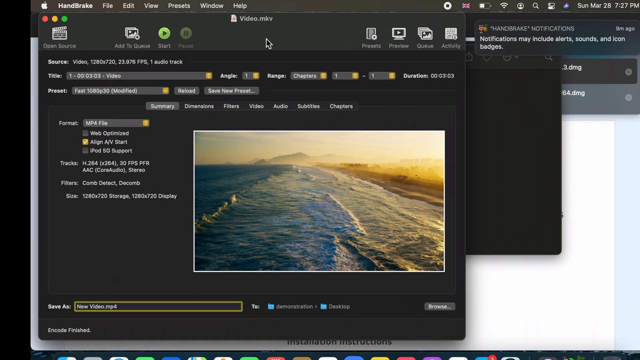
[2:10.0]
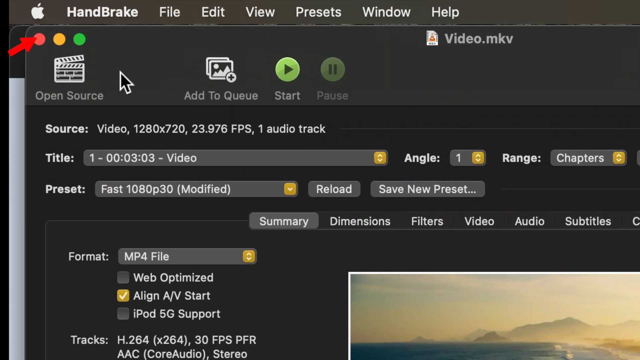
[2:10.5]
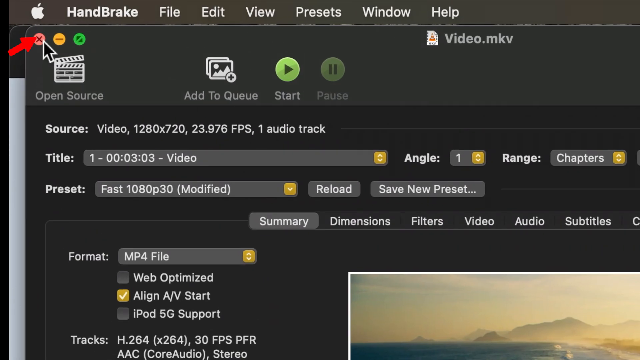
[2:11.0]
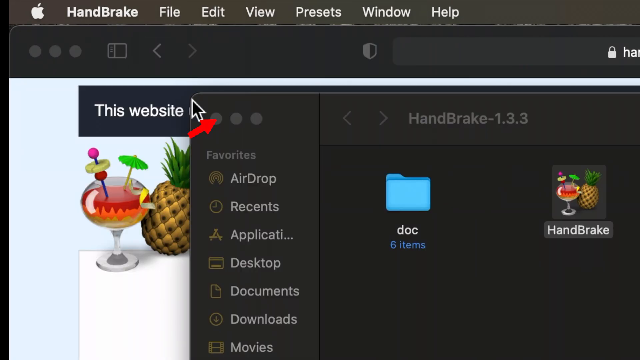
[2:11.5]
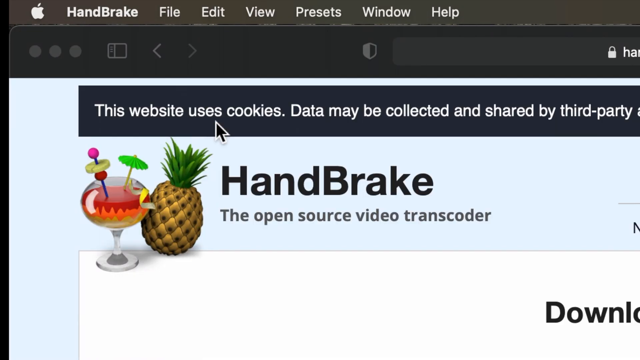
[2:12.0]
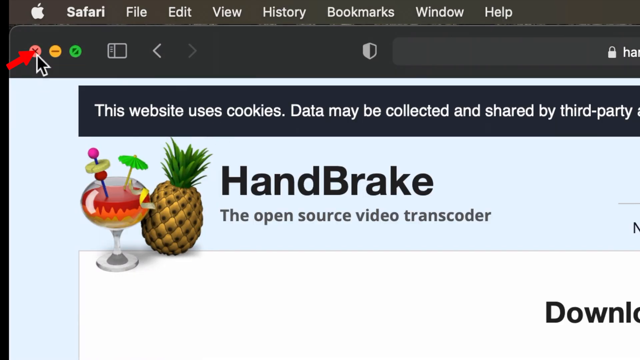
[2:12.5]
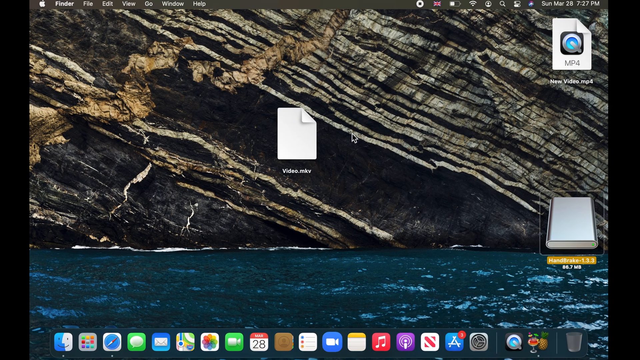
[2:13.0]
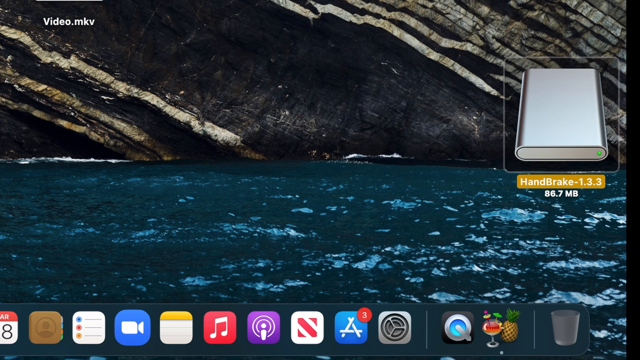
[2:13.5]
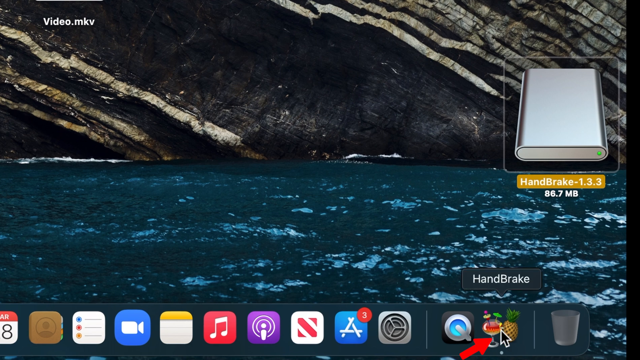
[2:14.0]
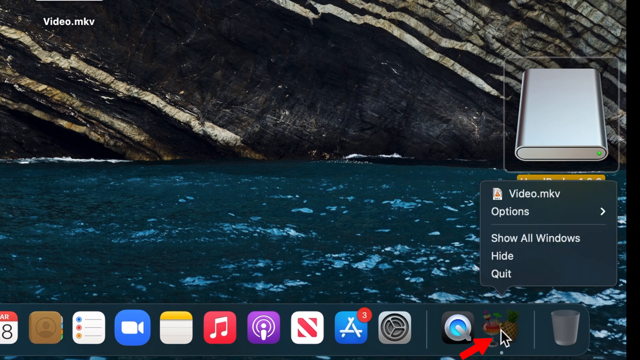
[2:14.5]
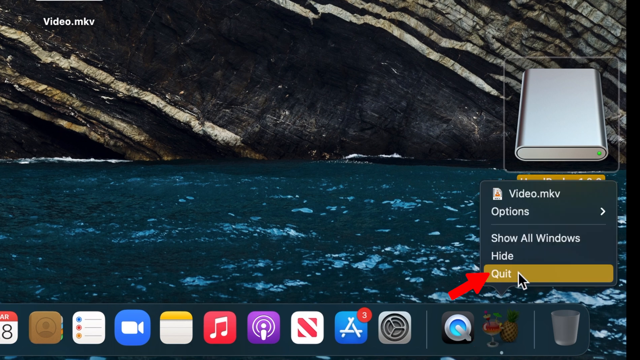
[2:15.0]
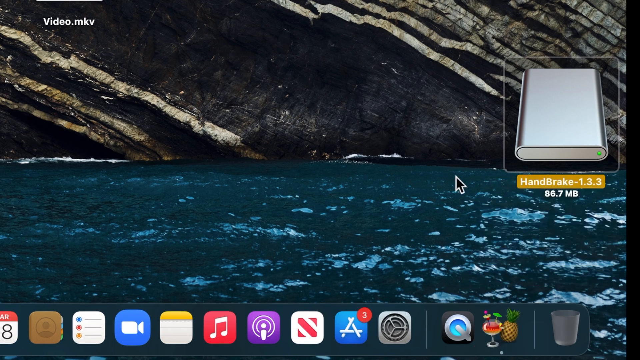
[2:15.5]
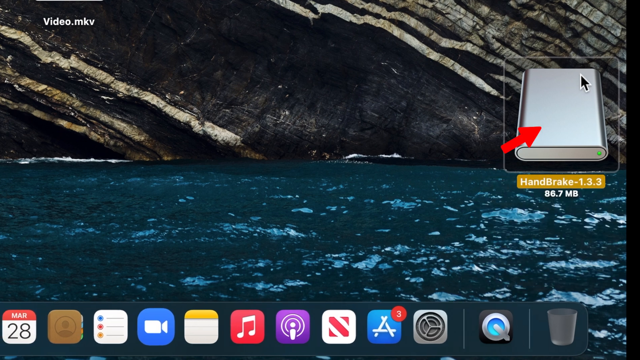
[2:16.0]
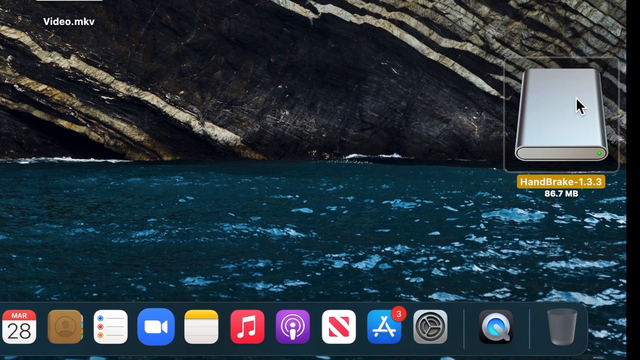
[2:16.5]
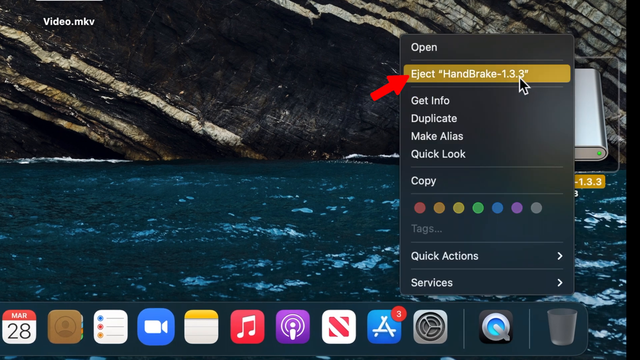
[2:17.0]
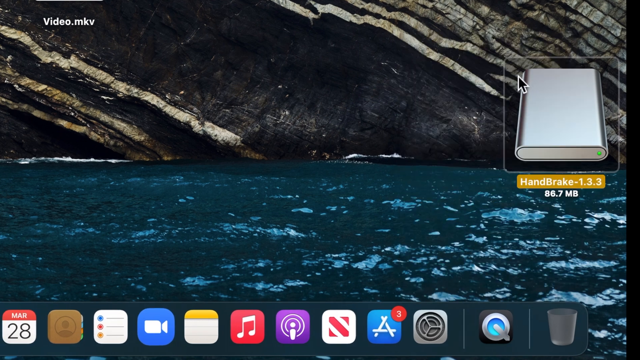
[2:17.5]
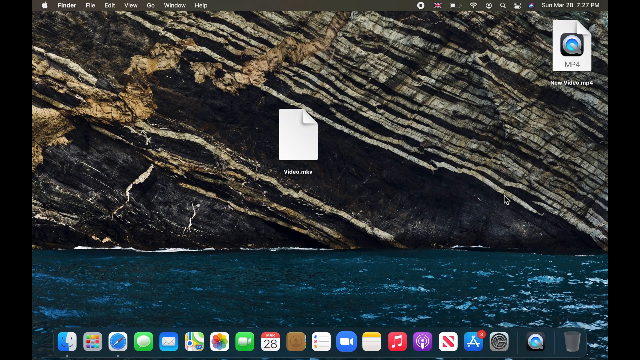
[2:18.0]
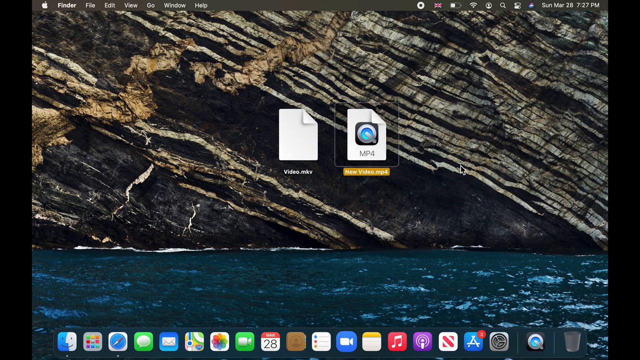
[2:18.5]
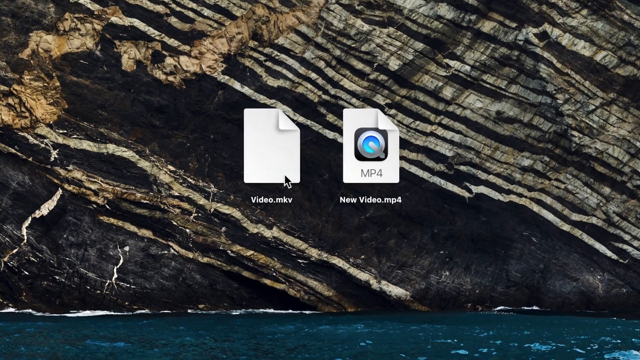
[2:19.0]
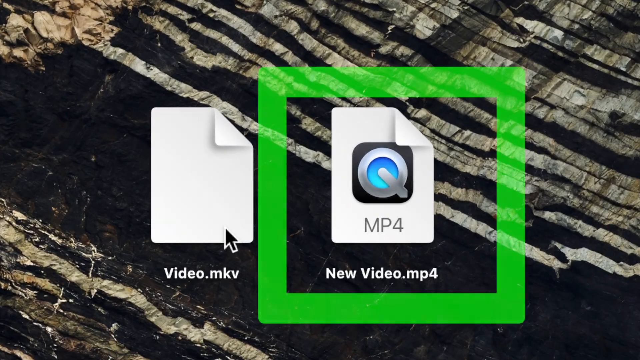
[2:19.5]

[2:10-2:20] Some kind of software is open, apparently on a Mac, since a little white apple logo is in the upper left-hand corner, and it looks like someone is showing a tutorial. The software is Handbrake. A little red arrow, which looks like it was added in, points to an orange X. The view then zooms into a desktop whose background looks like cliffs with ocean or water below them. On the desktop is what looks like a hard drive labeled "Handbrake-1.3.3." Some options come up and "Quit" is clicked. An arrow then points to the software, which is clicked, and more options pop up. The red arrow points to "Eject Handbrake-1.3.3," and the Eject button is clicked. A file is then dragged; it is a piece of paper with the corner folded down, labeled "new video.mp4." A thick green rectangle is placed around the video file.